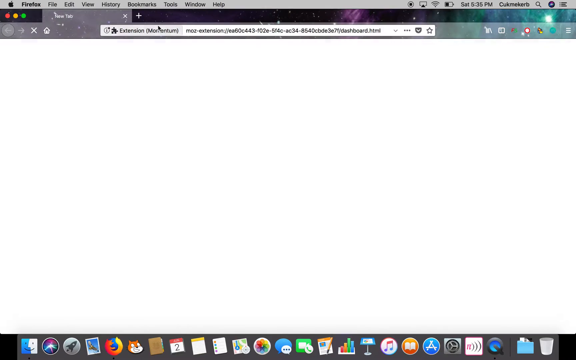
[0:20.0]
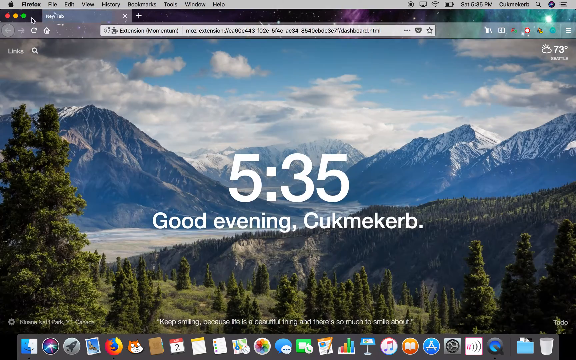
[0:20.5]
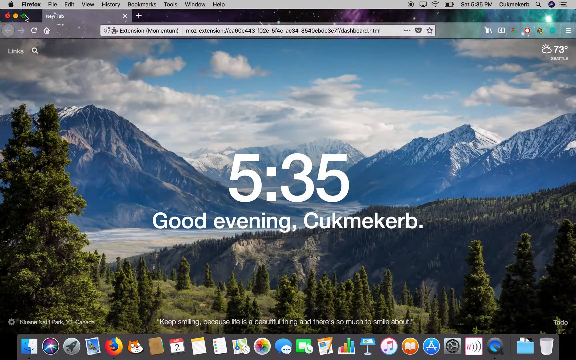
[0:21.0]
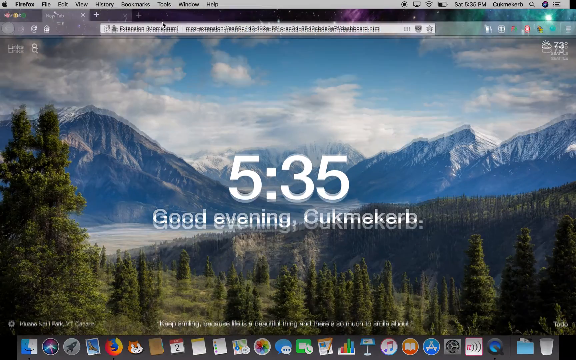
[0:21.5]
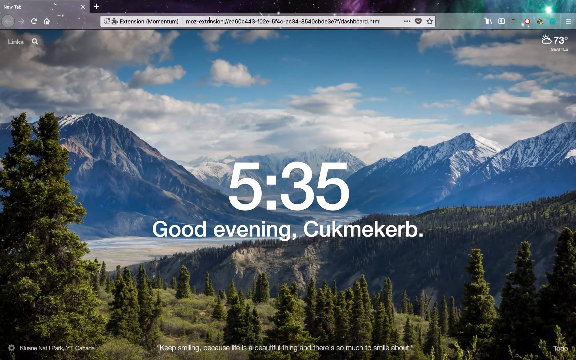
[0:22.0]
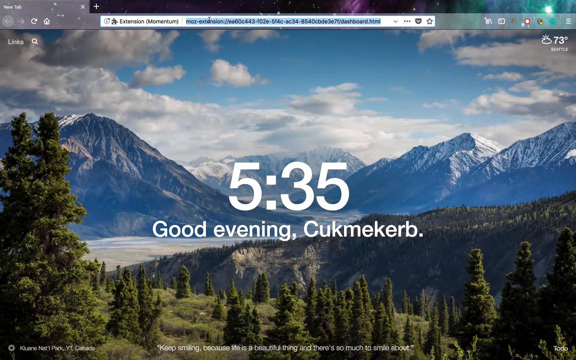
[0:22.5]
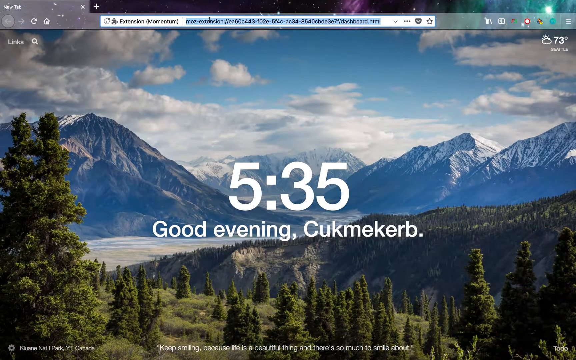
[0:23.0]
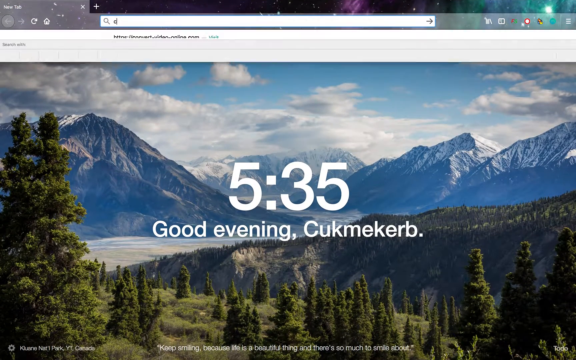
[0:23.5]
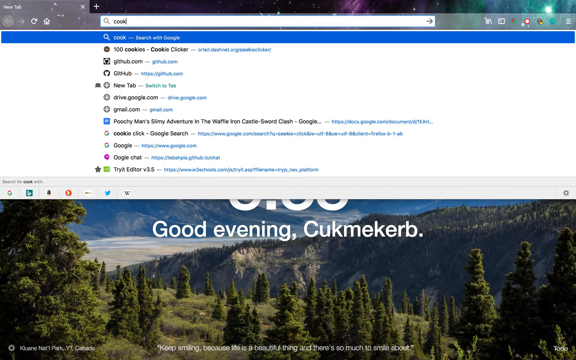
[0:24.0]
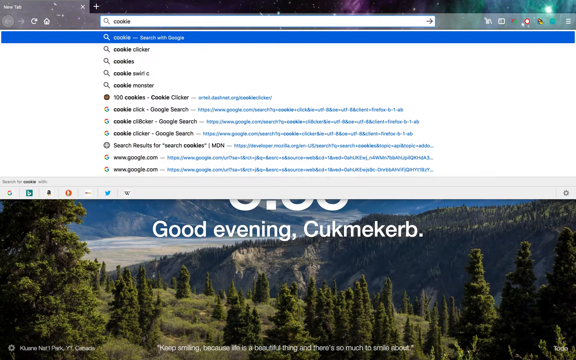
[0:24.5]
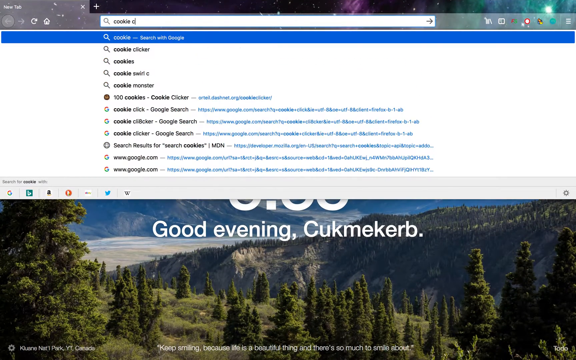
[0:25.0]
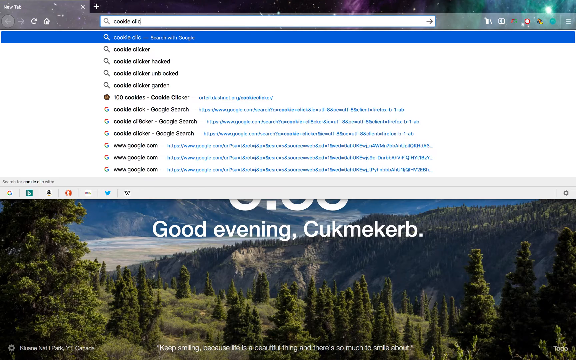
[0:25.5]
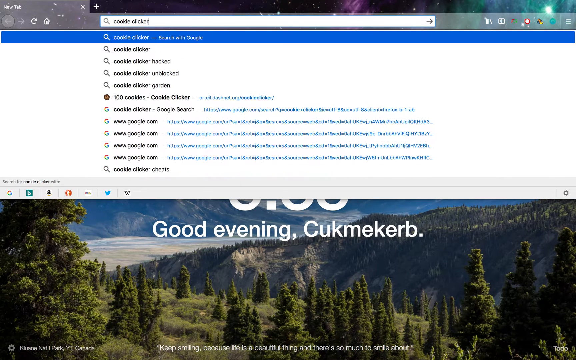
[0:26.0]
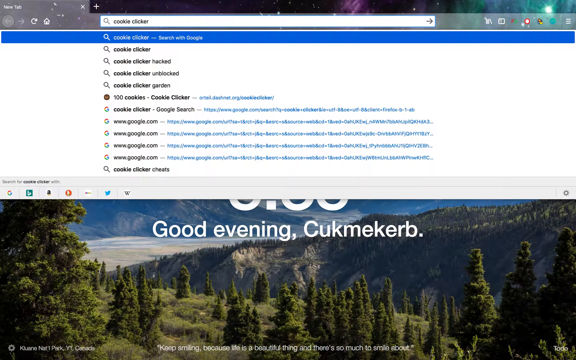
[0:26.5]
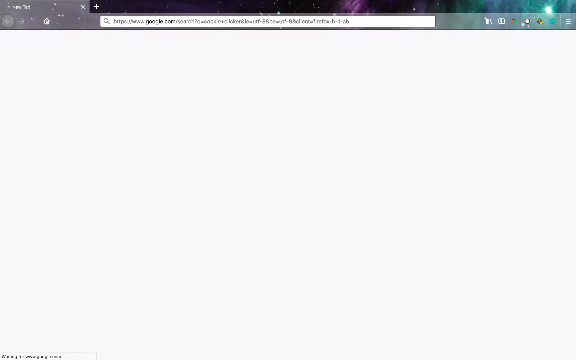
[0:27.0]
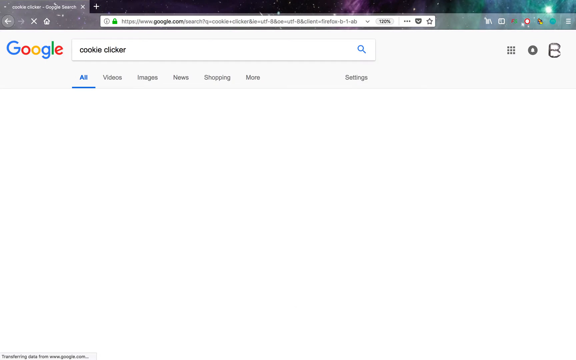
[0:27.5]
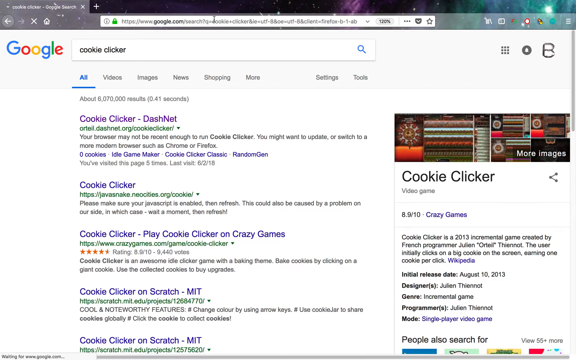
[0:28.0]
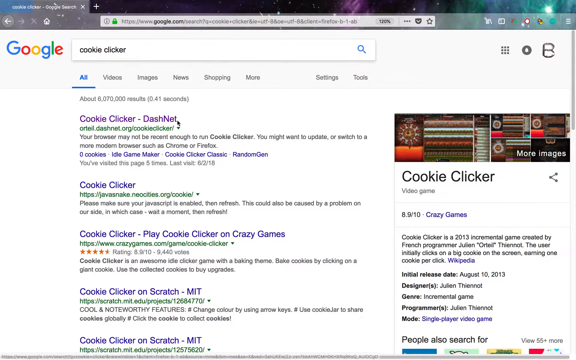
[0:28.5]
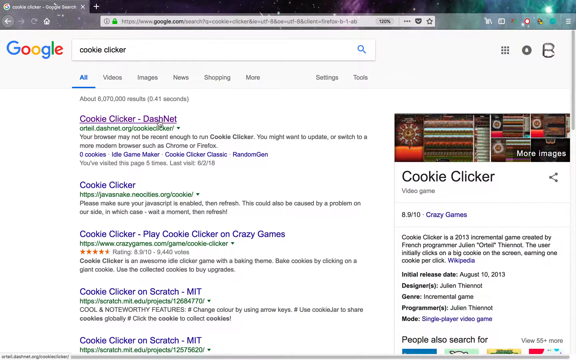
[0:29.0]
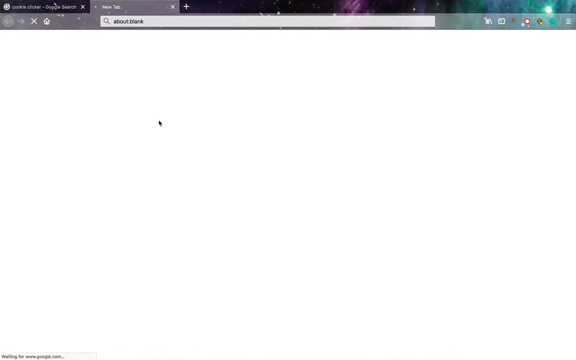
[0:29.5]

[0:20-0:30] The Firefox browser opens to a blank screen. As it progresses, it says "535 good evening" followed by a word spelled c-u-k-m-e-k-e-b-r. He then goes to the URL bar and searches through the browser search, apparently for cookie clicker. It goes to Google, and he clicks on the first result that pops up. The website starts to load before its content appears.